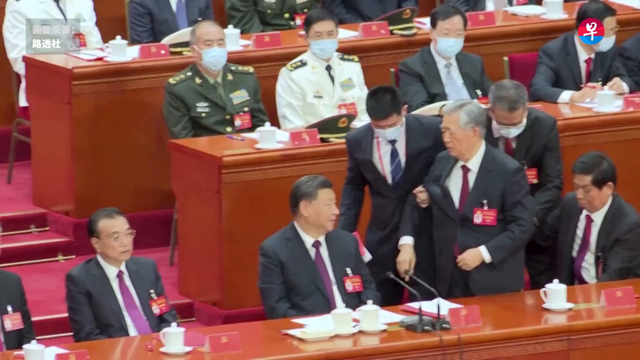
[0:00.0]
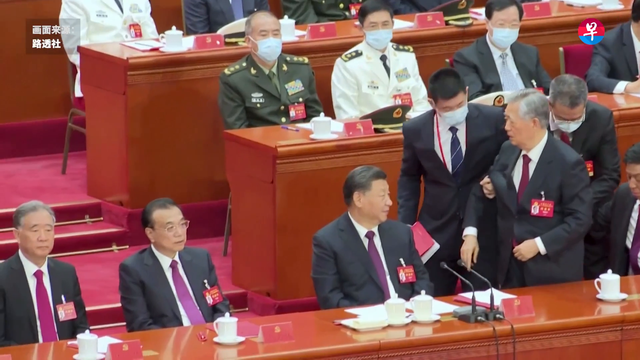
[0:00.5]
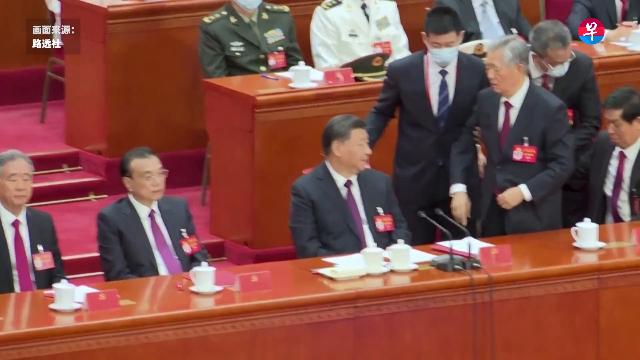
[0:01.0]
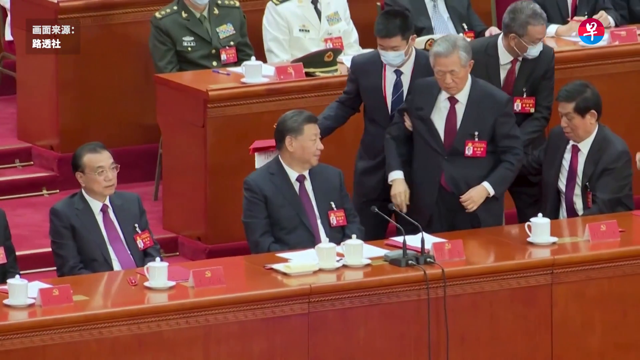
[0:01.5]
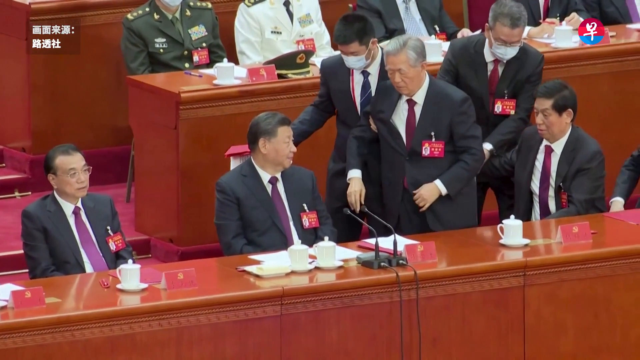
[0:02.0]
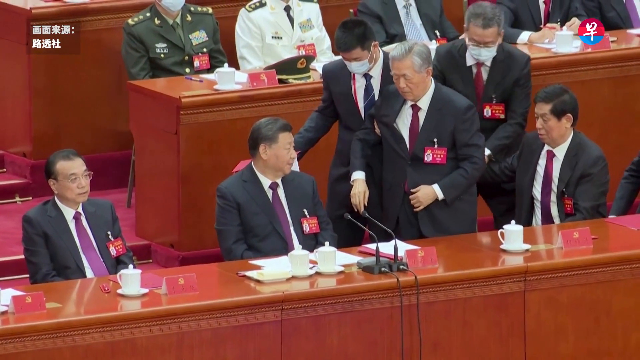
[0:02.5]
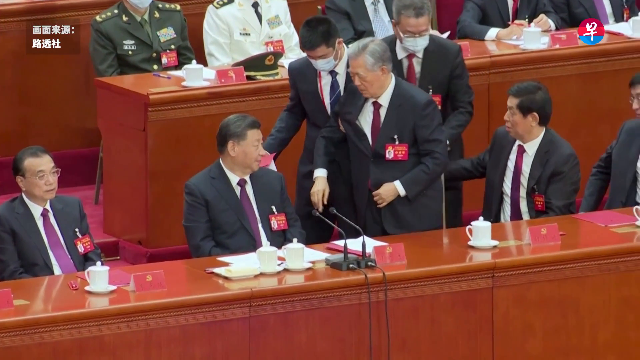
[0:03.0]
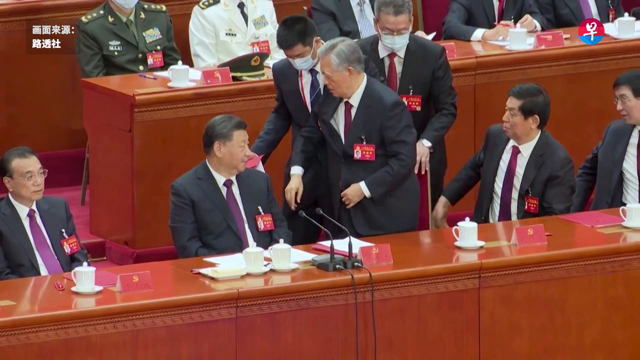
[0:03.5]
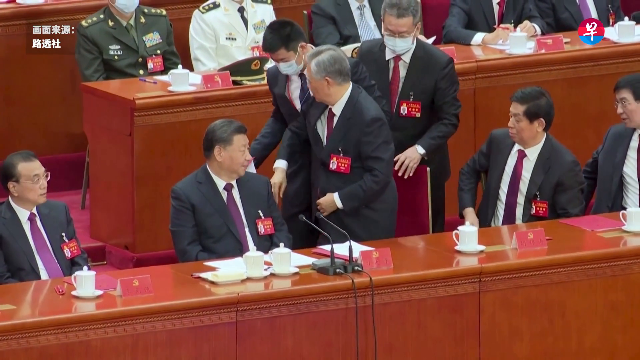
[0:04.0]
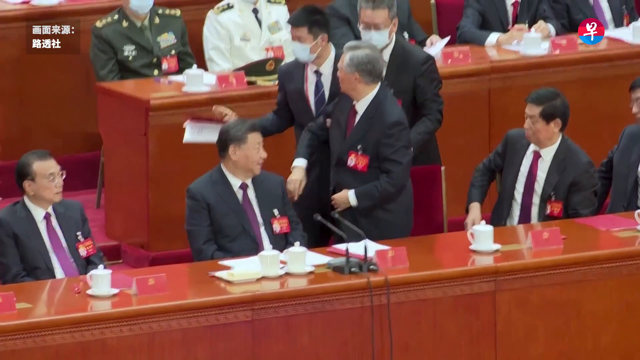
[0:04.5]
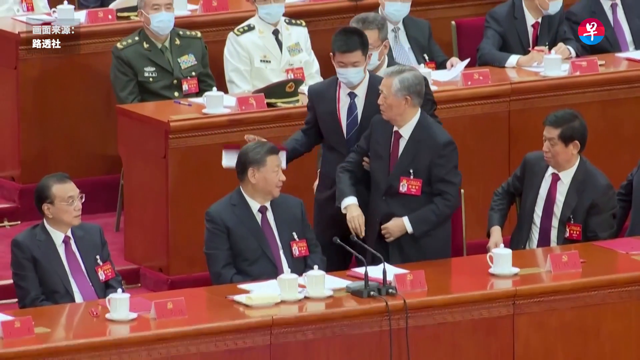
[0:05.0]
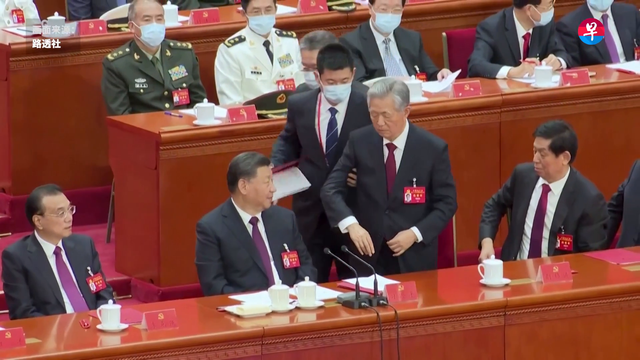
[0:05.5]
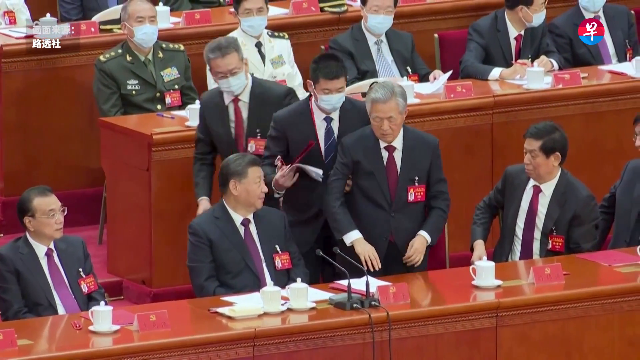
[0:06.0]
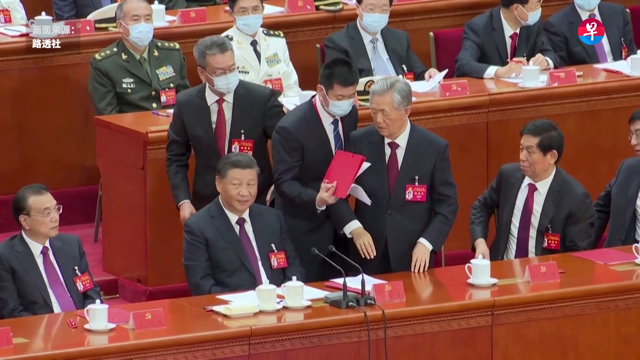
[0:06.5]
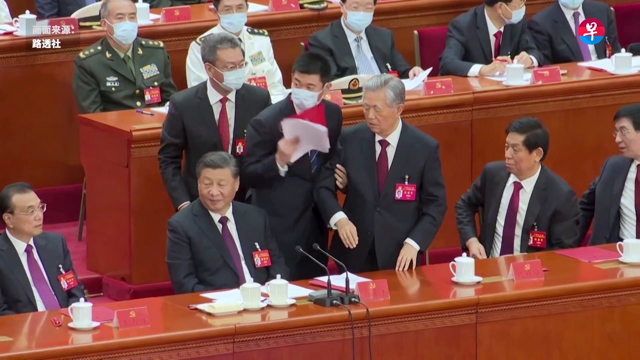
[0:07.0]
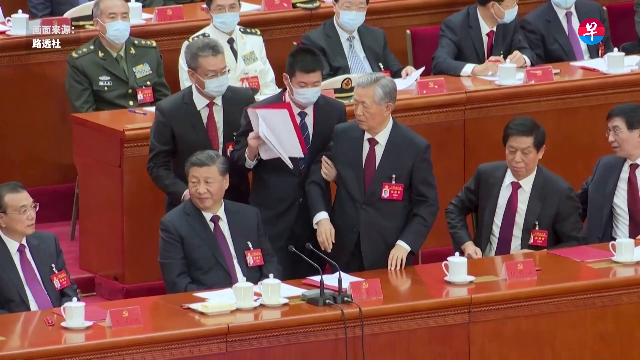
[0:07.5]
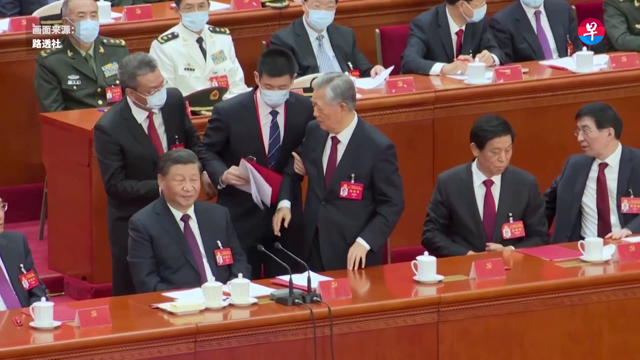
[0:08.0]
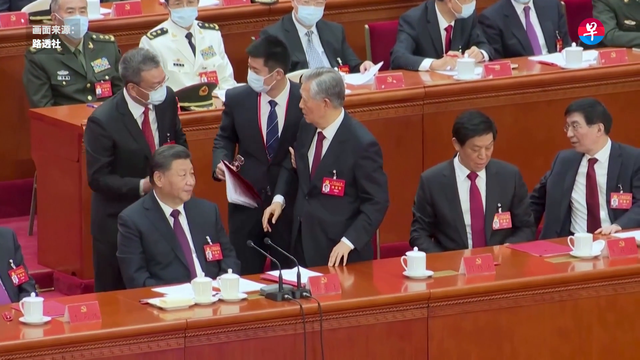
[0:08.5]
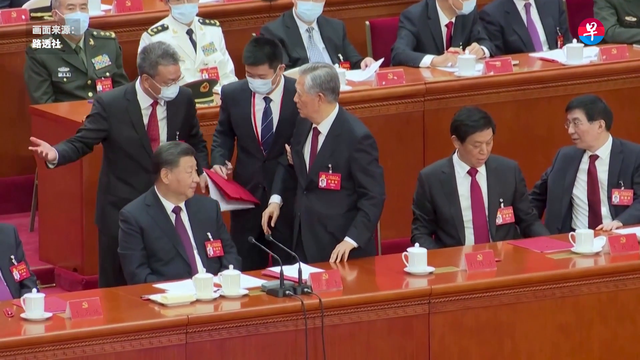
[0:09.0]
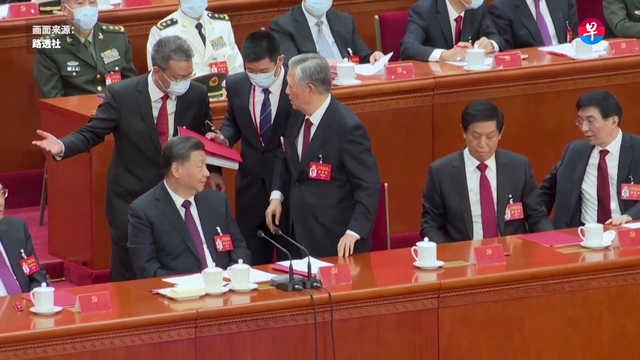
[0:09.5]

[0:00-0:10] A number of people sit at brown desks, and the flooring appears to be pink carpeting. A gentleman stands upright with two gentlemen behind him in greyish suits; they all seem to be wearing grey suits and white collared shirts. The man in the middle, an old gentleman with whitish, greyish, silver hair, has a red tag on his jacket. He stands beside a man sitting at the table with black microphones in front of him. The two men have him by the arms and are trying to lead him away from the other gentlemen, who all sit at long brown tables, and his red chair has been moved back. One gentleman wearing a white mask holds a red binder and keeps motioning for the old gentleman to go forward as they try to take him away. The old gentleman looks confused.